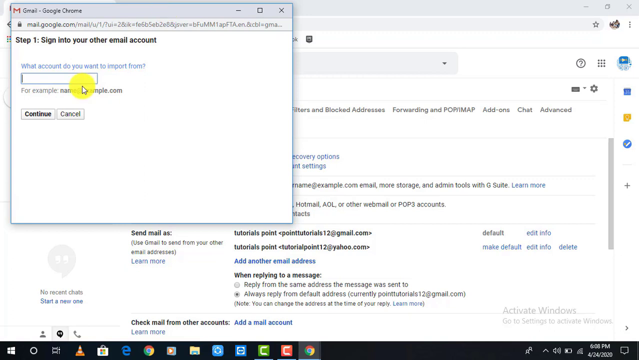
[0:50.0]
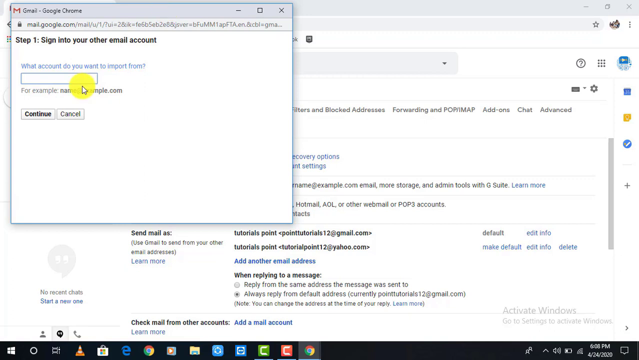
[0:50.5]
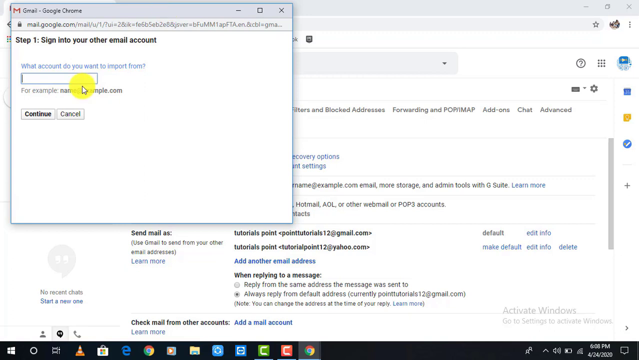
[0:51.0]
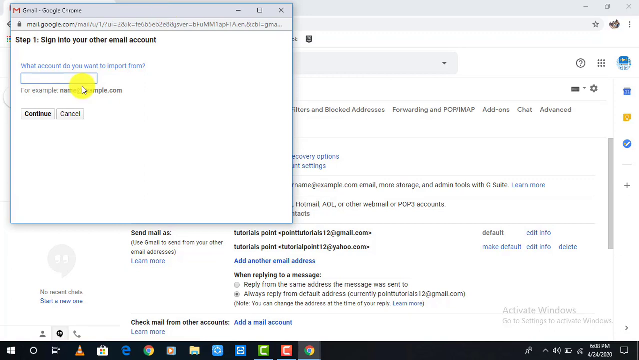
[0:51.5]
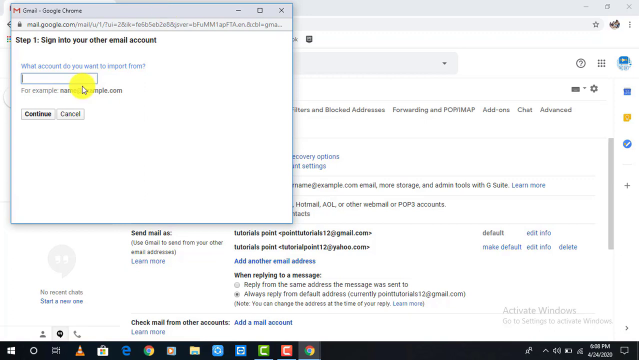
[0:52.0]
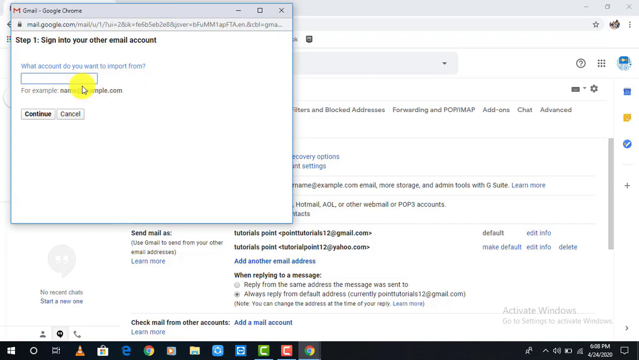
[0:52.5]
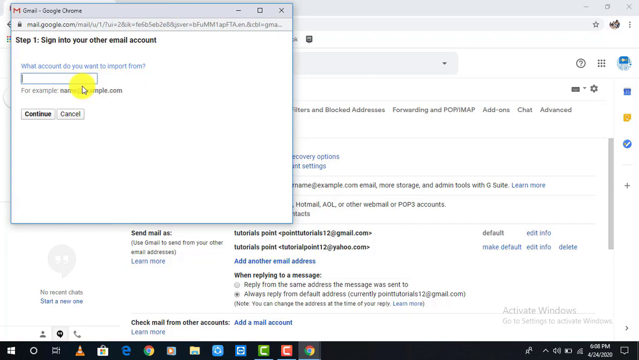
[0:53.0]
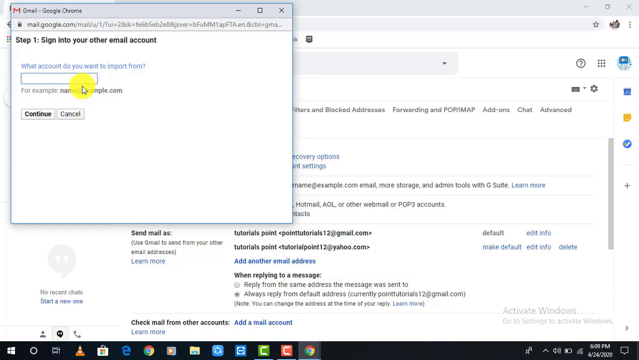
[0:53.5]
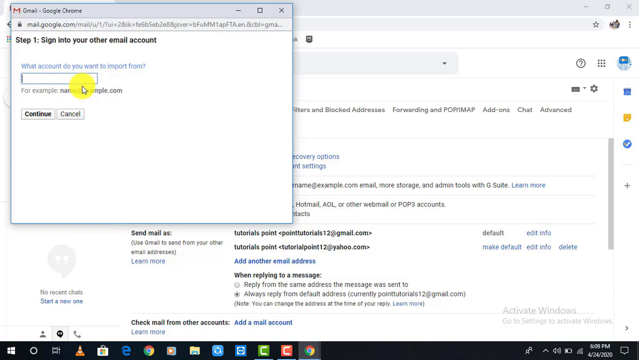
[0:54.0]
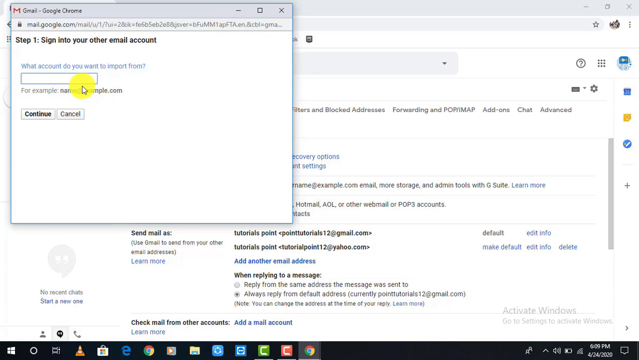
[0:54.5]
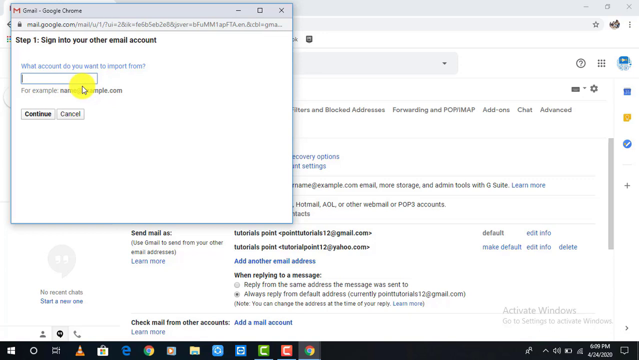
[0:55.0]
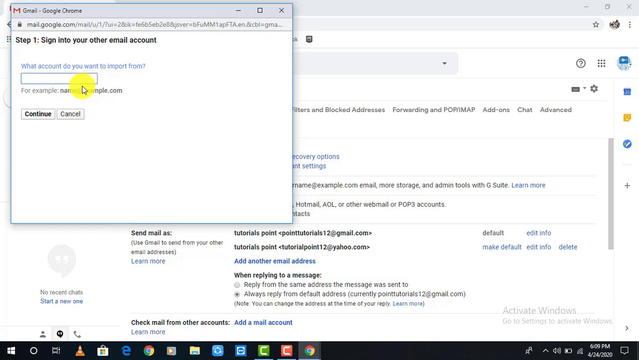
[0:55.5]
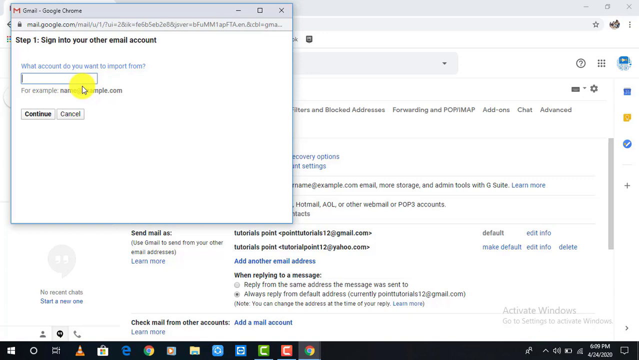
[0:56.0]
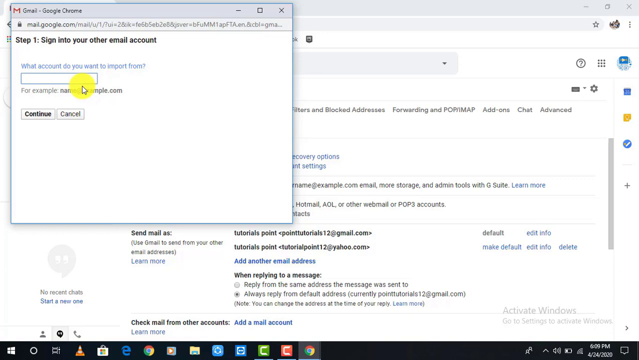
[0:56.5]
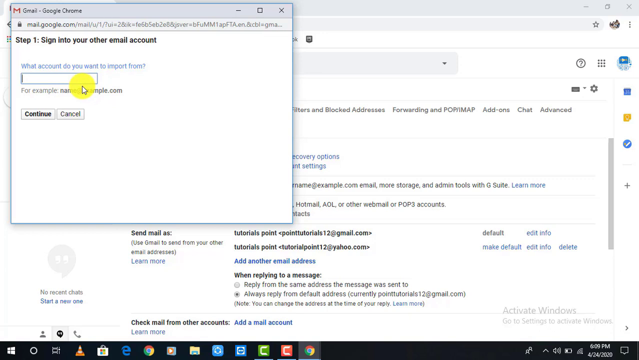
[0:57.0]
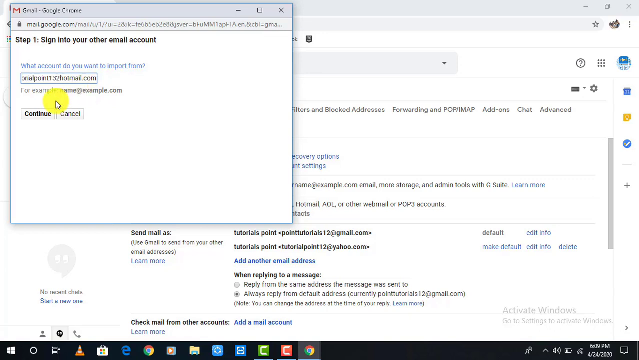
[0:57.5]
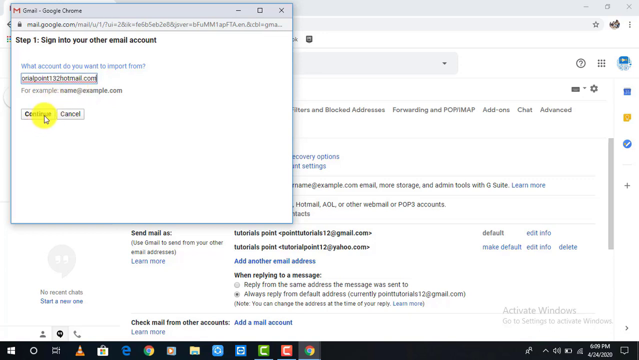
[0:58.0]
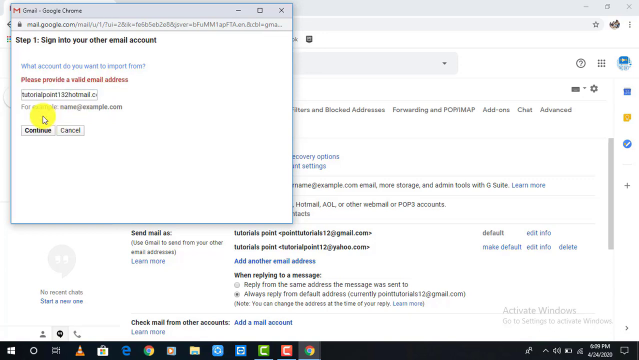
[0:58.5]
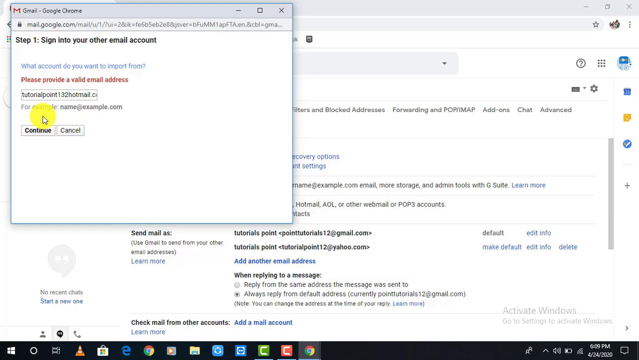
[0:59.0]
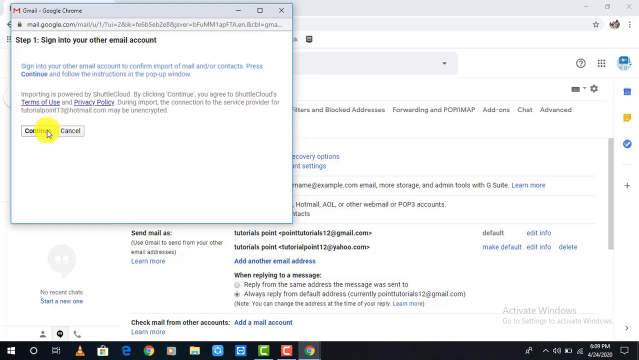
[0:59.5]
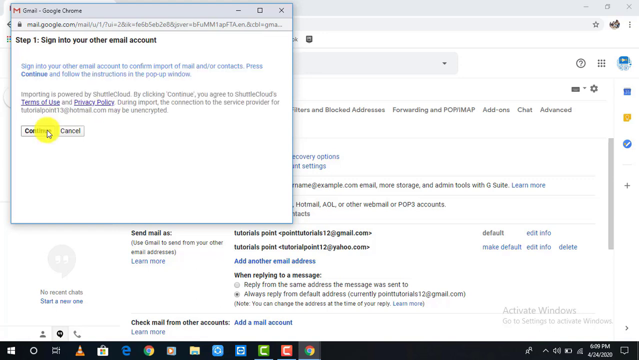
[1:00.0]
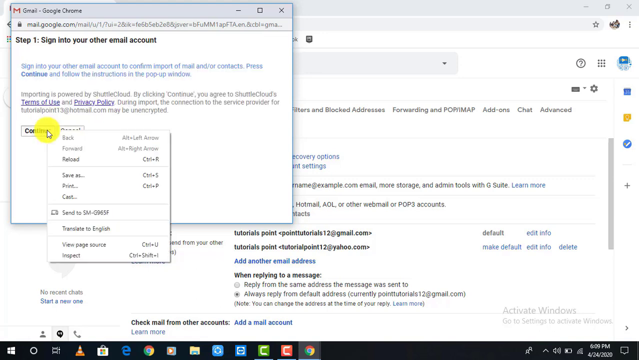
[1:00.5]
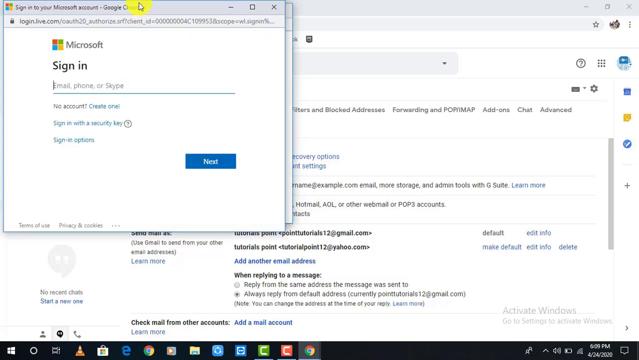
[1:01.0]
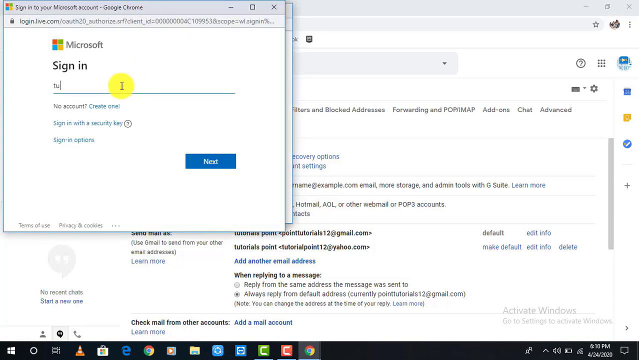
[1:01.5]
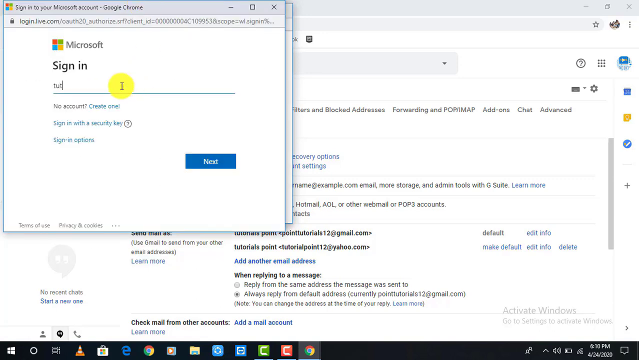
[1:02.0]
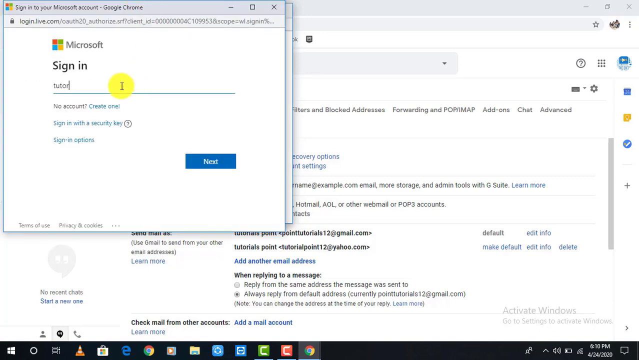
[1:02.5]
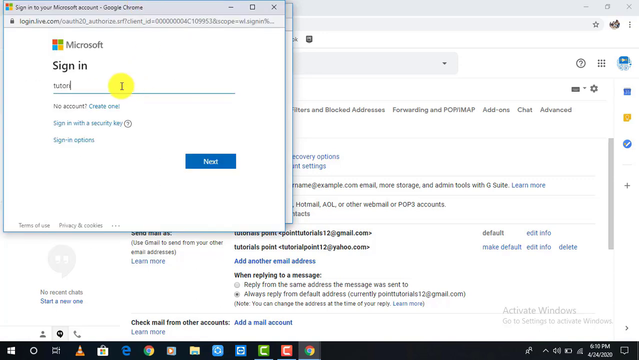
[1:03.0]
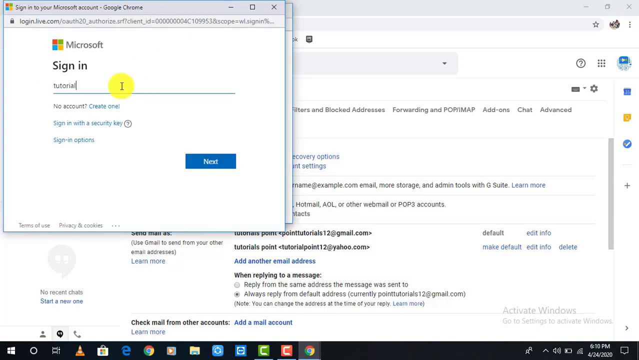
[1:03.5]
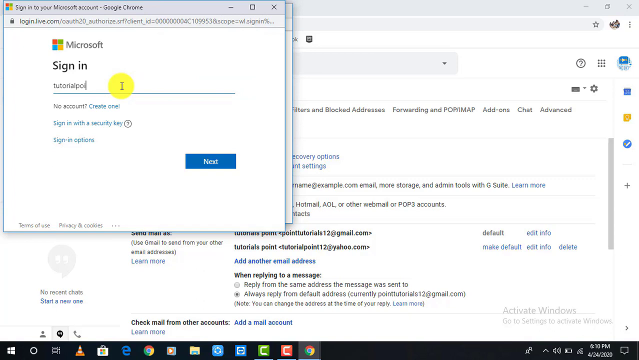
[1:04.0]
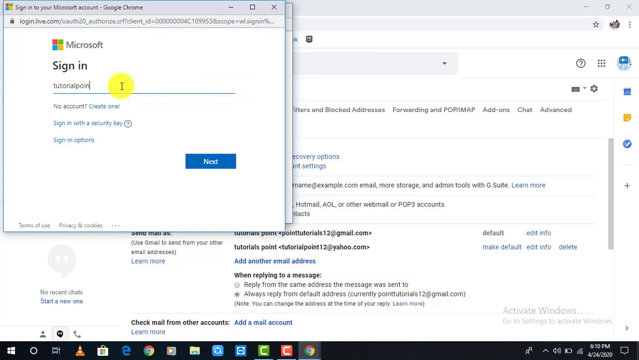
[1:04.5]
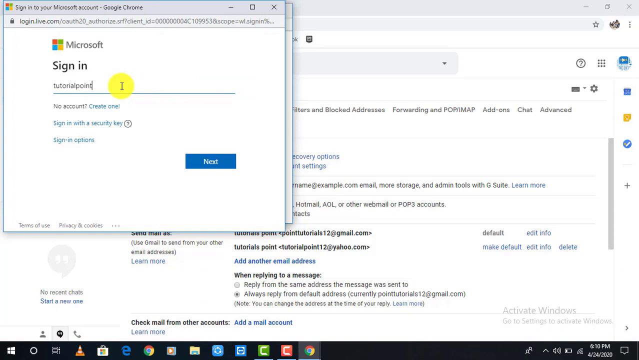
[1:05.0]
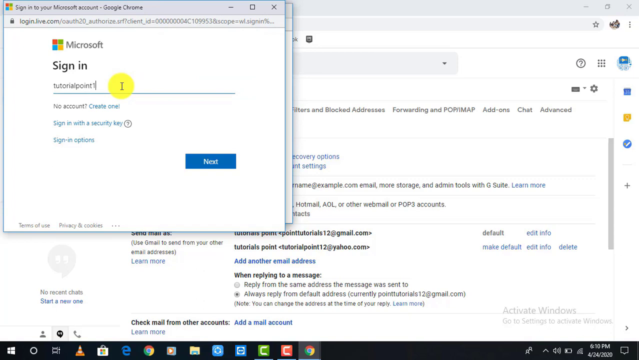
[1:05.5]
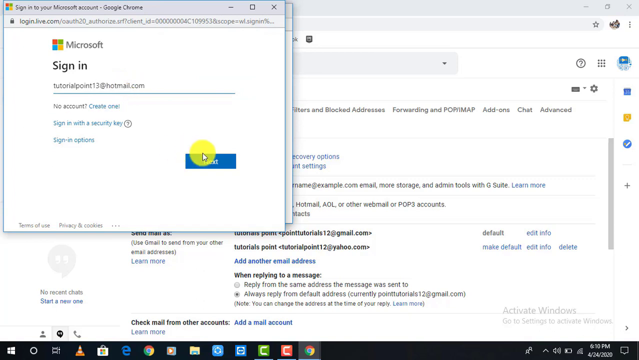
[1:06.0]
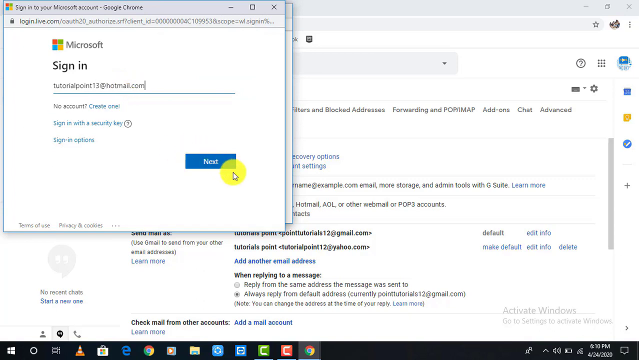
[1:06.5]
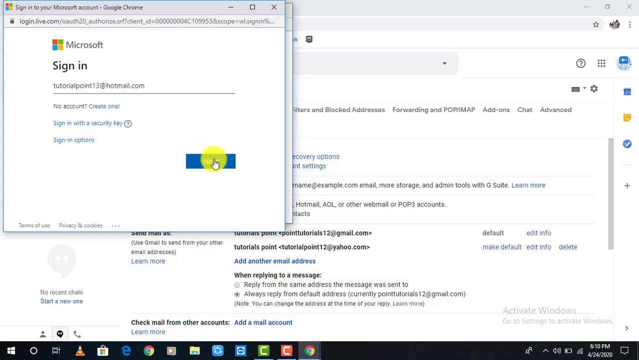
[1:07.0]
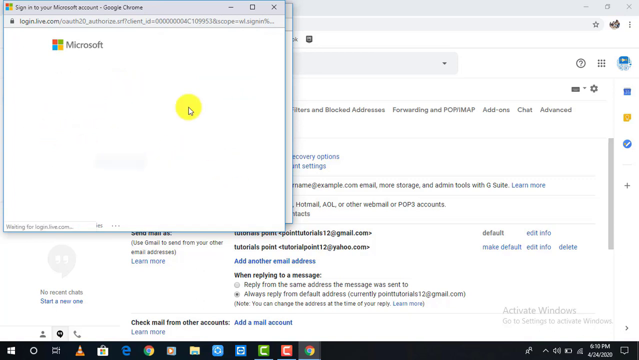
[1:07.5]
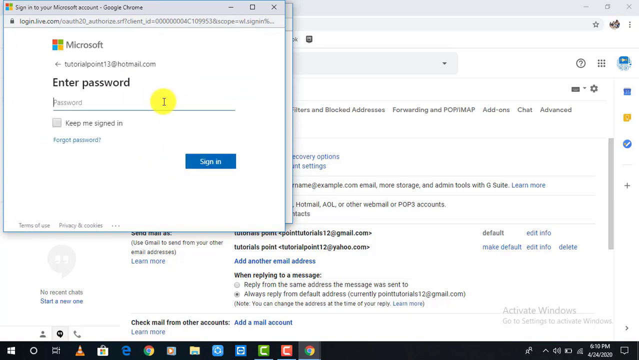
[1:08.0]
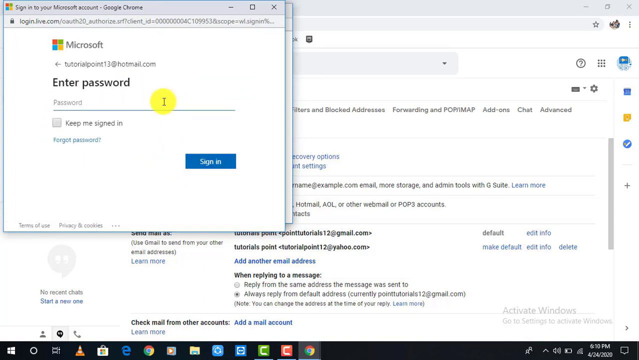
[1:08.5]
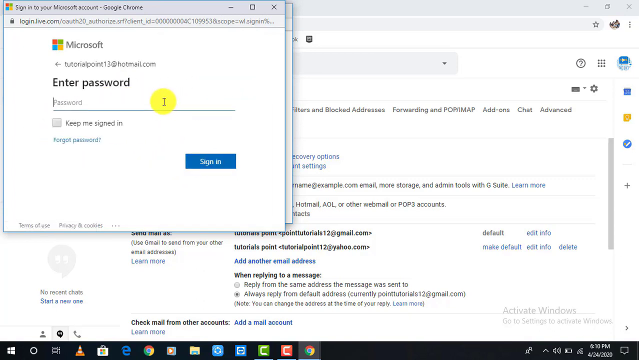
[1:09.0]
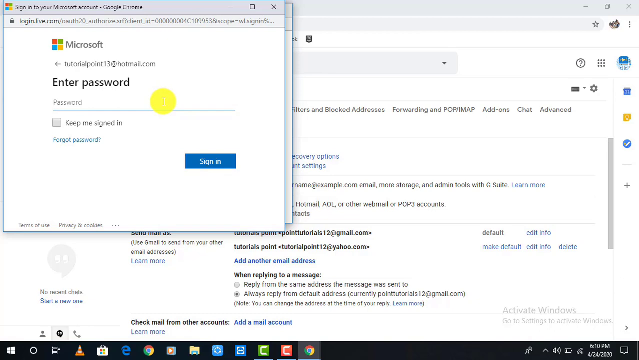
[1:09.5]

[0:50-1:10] The pop-up is still open, reading "step one sign into your email account," with a box containing a cursor that seems to be flashing and the text "what account do you want to import from." The user enters an email address that appears to be from hotmail.com, then, given the choice of continue or cancel, clicks continue. A message appears: "sign into your other email to confirm import of mail and or contacts press continue to follow the instructions in the pop-up window." Again offered continue or cancel, the user clicks continue. A Microsoft pop-up appears asking them to sign in; they enter tutorial point at hotmail.com and click next, then type their password, which appears only as circles.